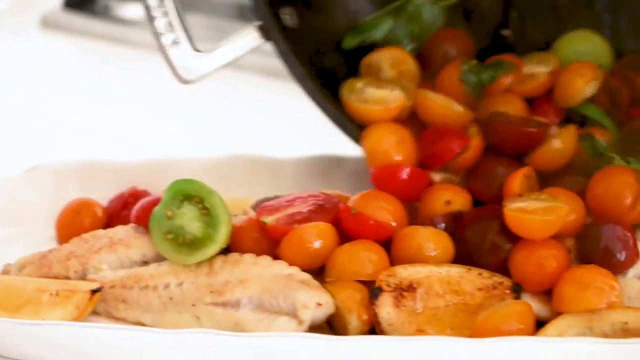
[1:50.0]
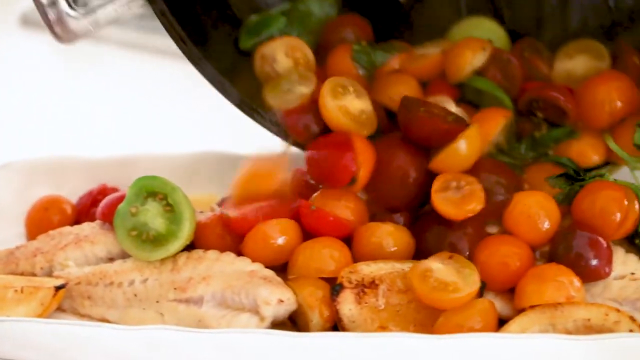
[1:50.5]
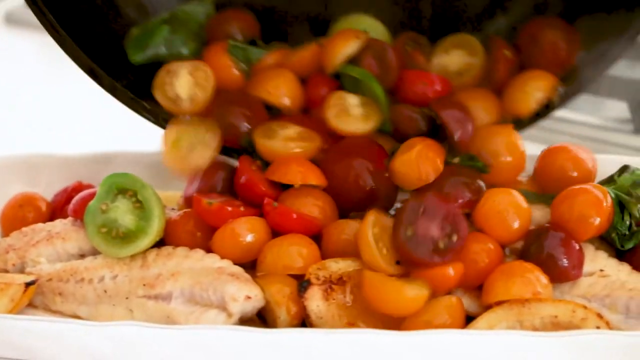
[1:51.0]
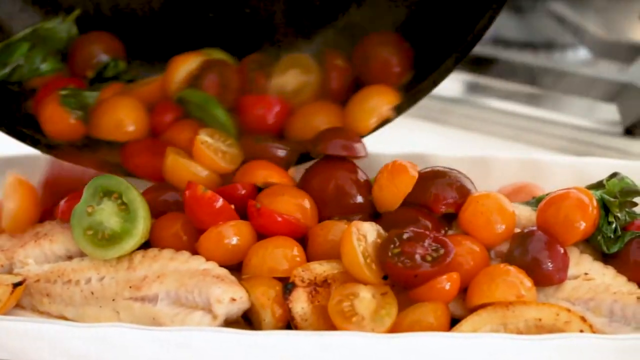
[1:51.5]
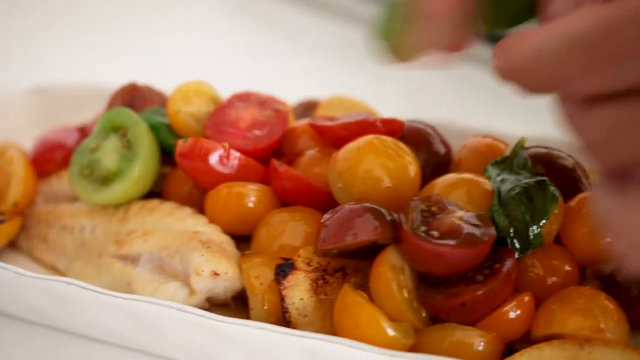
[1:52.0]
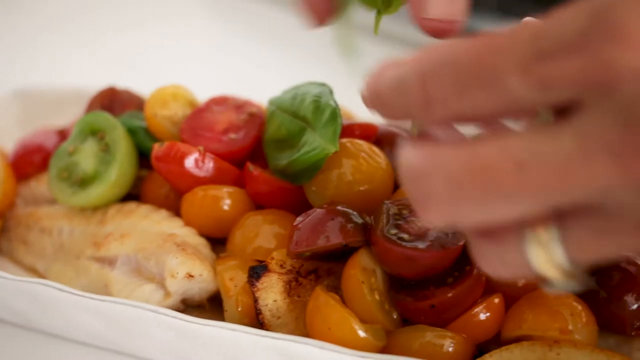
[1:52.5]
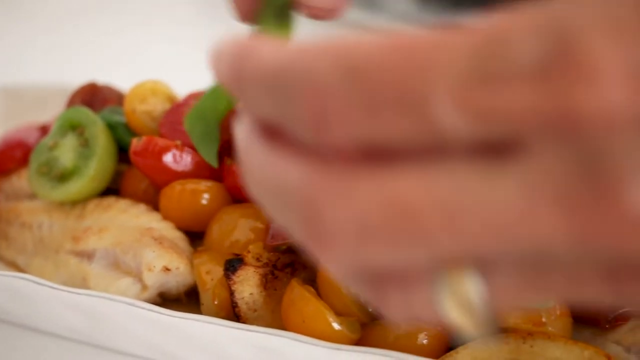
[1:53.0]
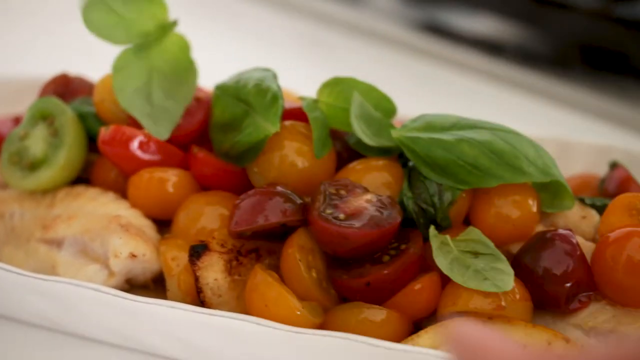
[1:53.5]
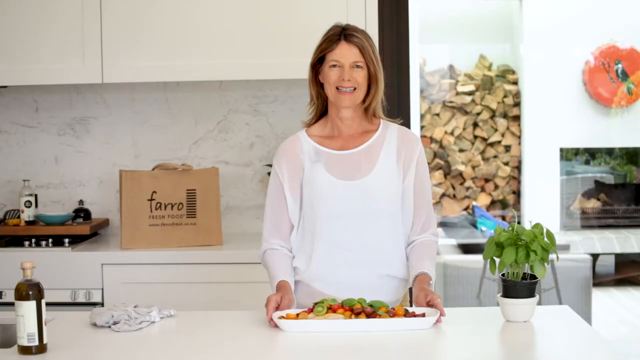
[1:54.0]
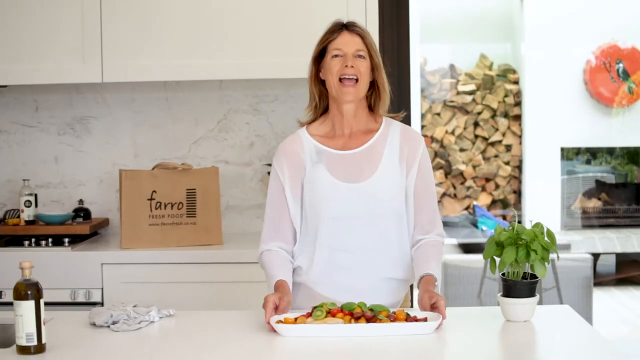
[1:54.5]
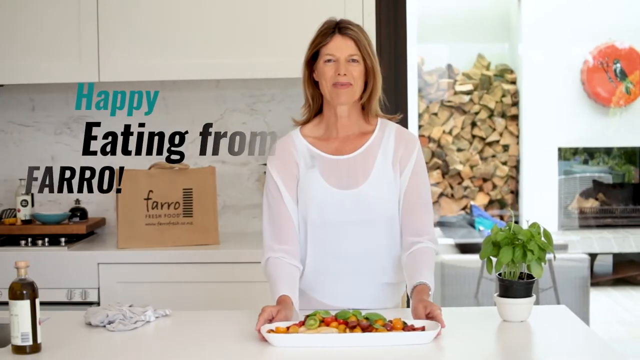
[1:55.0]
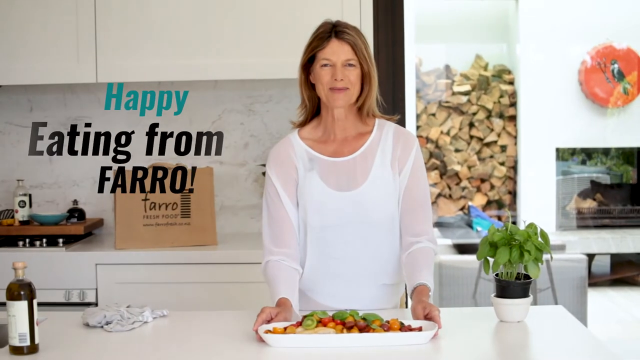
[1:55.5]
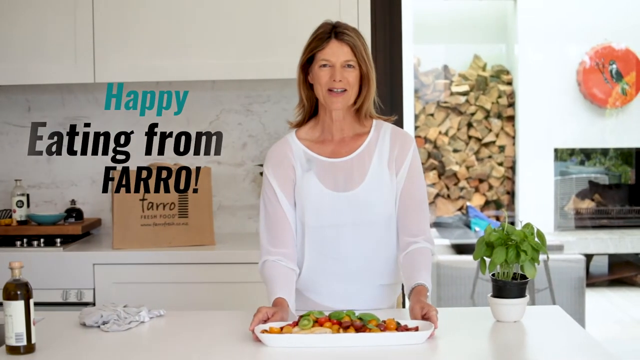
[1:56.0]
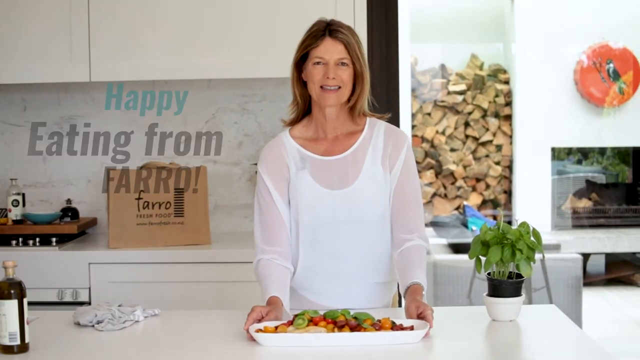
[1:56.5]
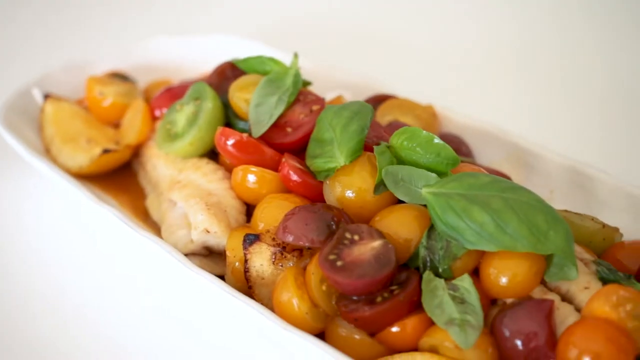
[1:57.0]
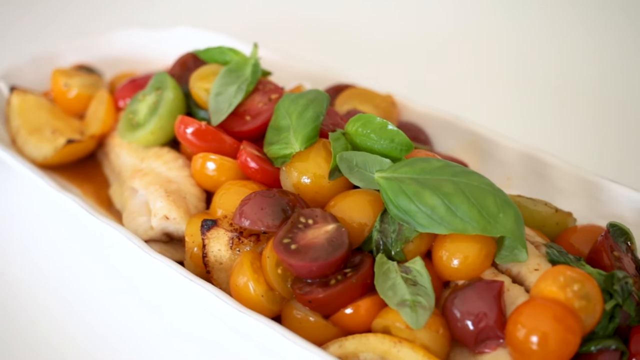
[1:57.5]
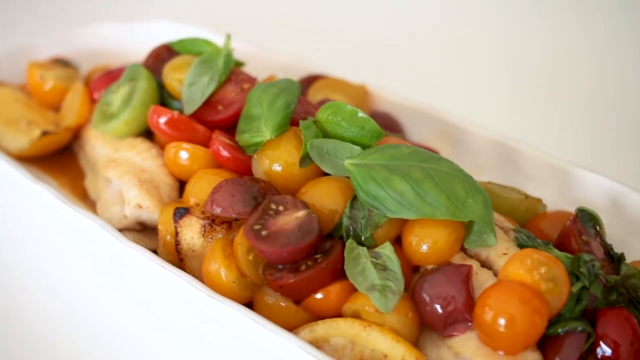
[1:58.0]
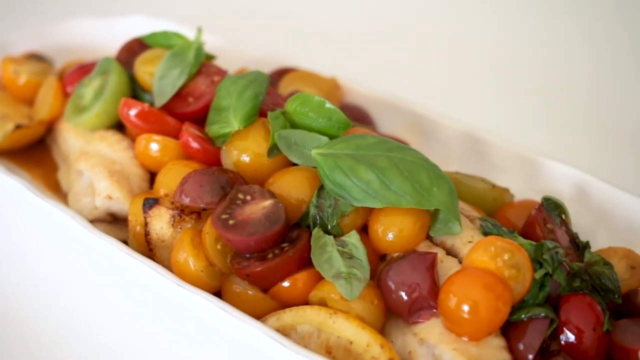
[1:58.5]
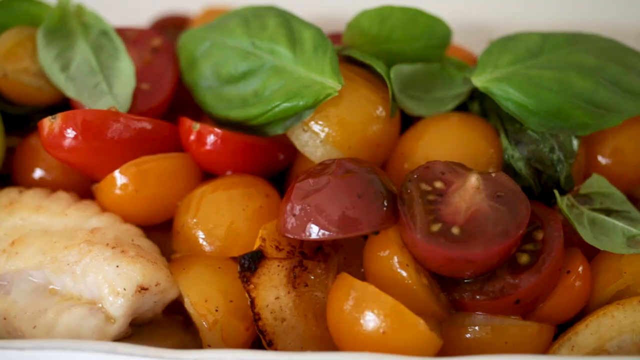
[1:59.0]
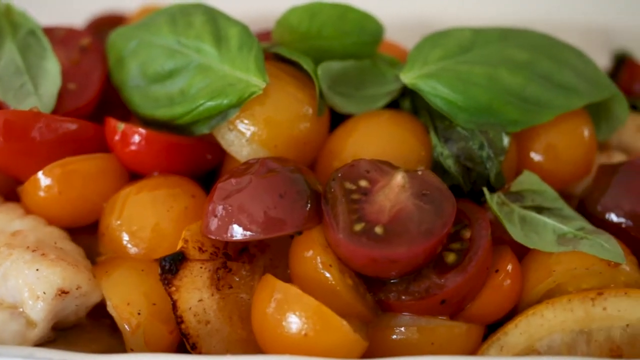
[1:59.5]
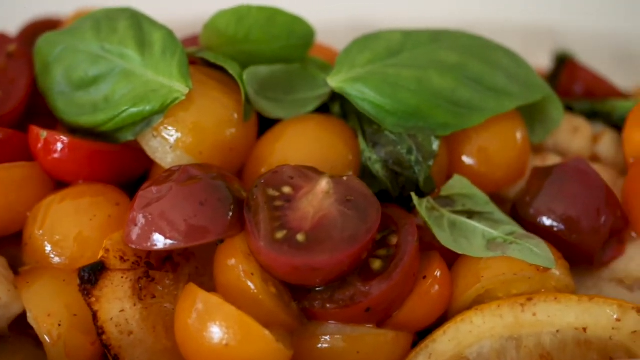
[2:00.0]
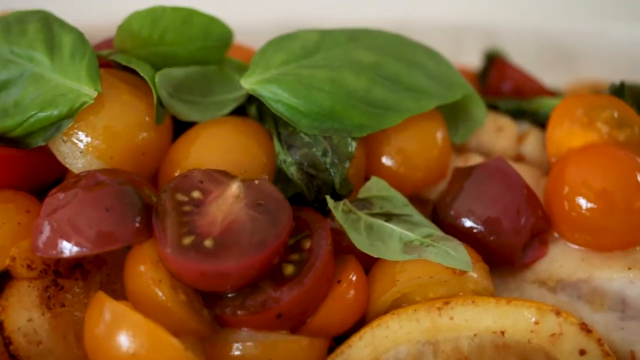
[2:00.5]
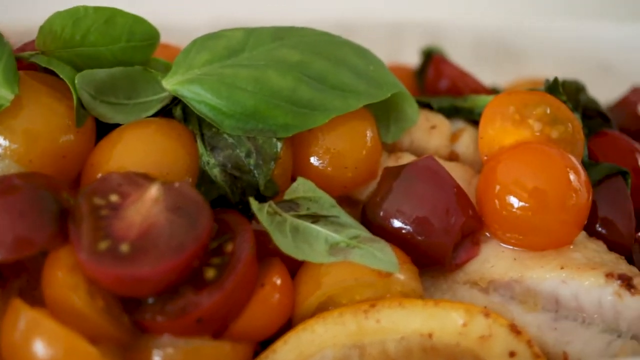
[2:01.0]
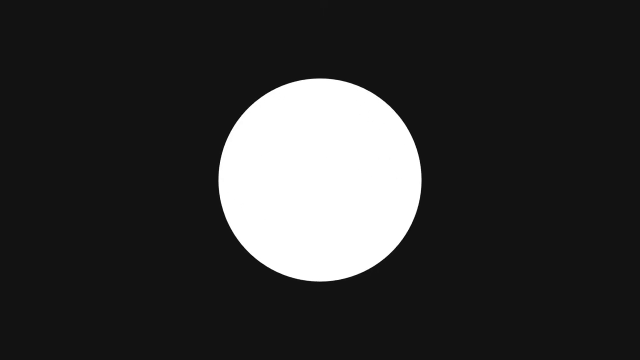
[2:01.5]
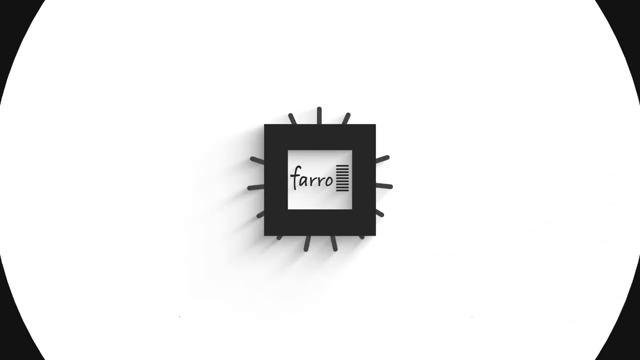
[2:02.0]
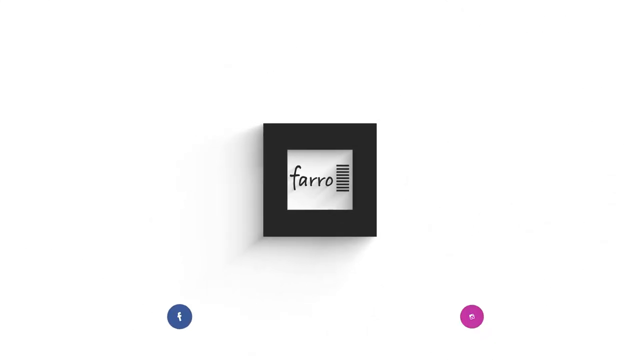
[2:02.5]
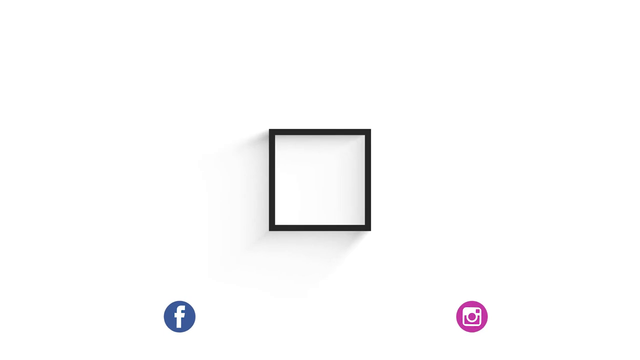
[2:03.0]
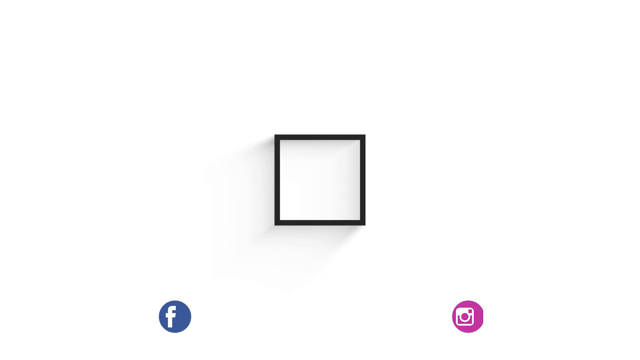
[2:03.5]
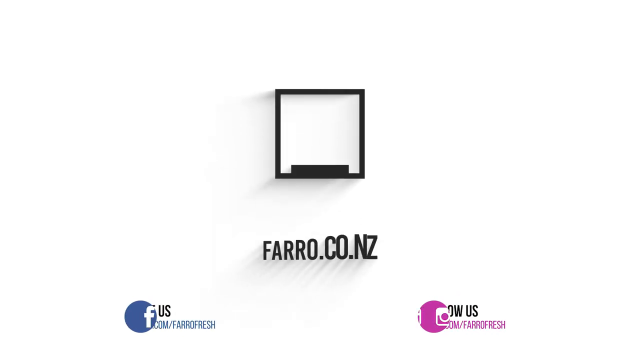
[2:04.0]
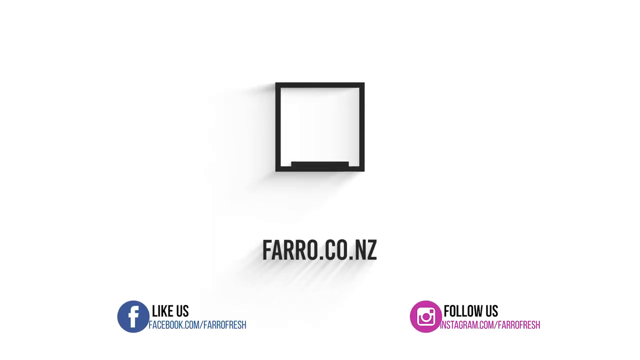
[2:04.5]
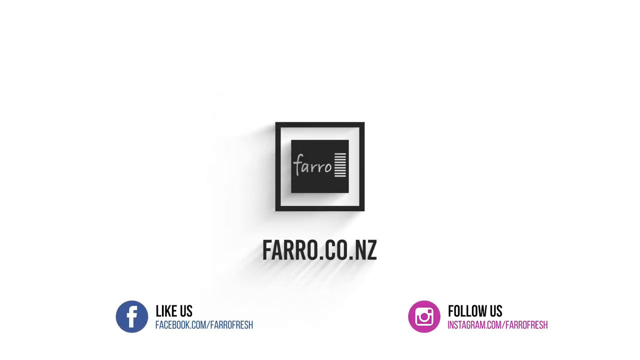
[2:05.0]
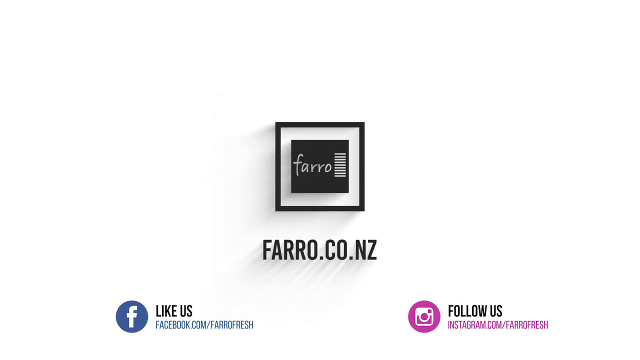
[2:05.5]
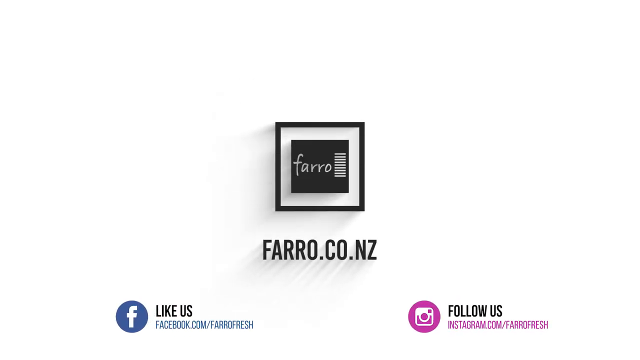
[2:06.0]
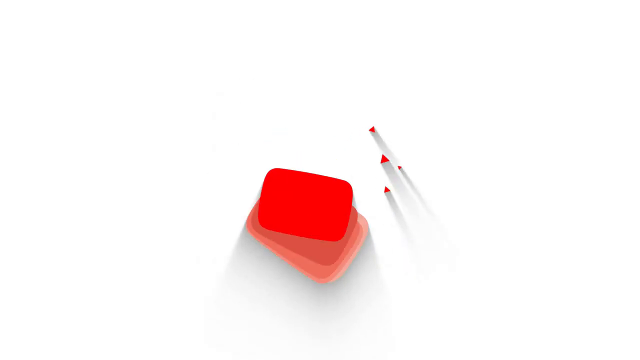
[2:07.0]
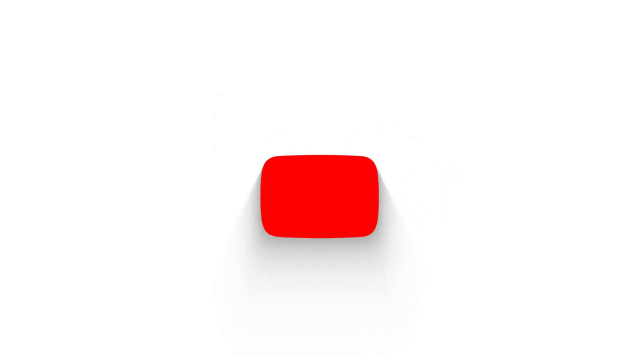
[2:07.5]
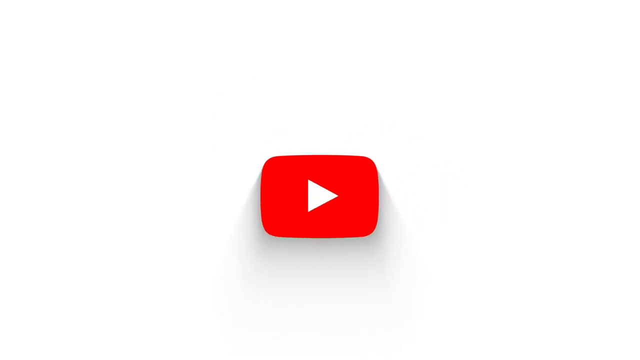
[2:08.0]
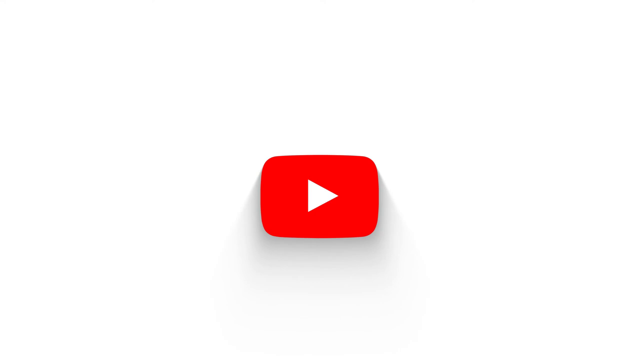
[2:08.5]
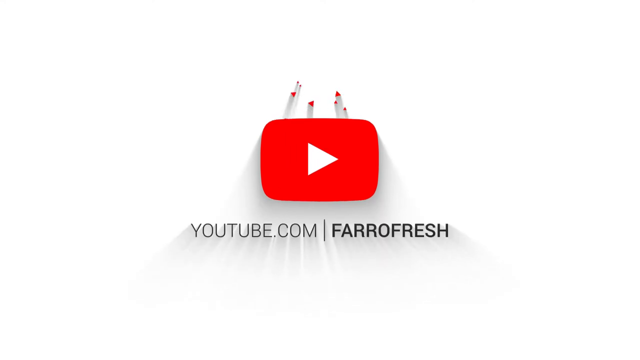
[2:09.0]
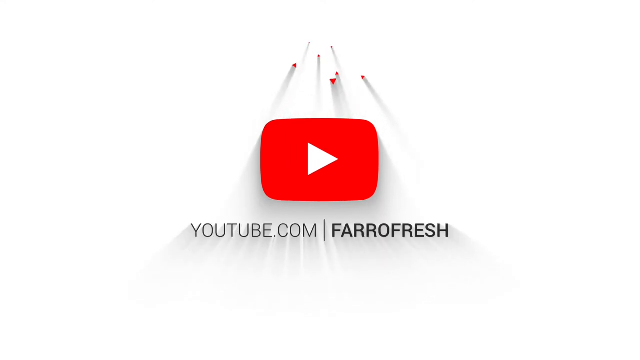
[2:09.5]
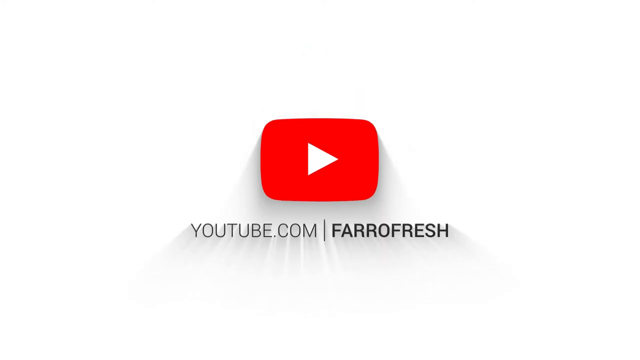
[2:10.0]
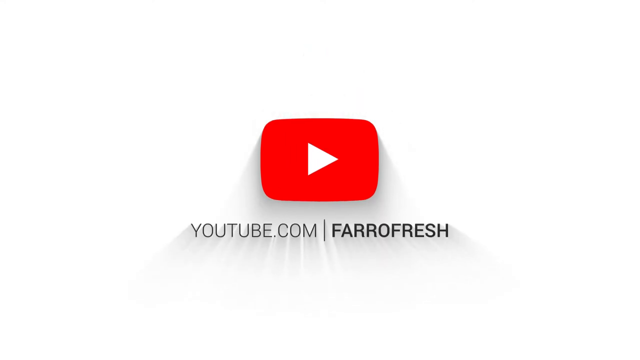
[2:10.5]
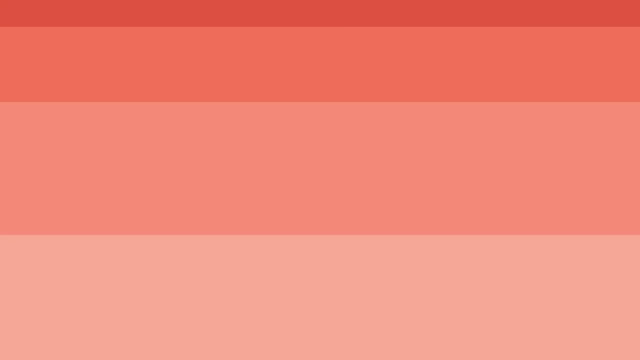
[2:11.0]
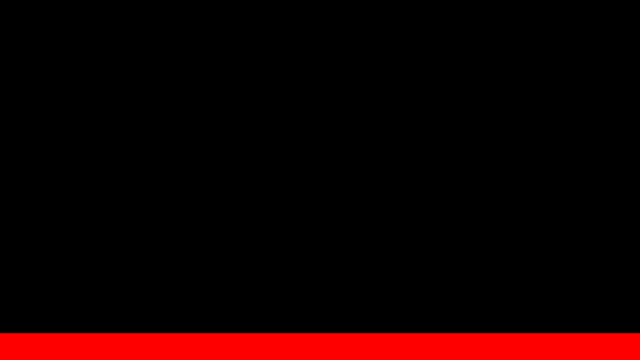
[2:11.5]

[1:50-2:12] Everything is dished into the white serving dish with the fish fillets and fried lemon slices. Janine puts the dish on top of the white kitchen counter, with a little of the balsamic leaves drizzled over it. Text appears with information about her cooking YouTube channel and how to subscribe. Before the end, text shows a "happy eating" message from Janine.